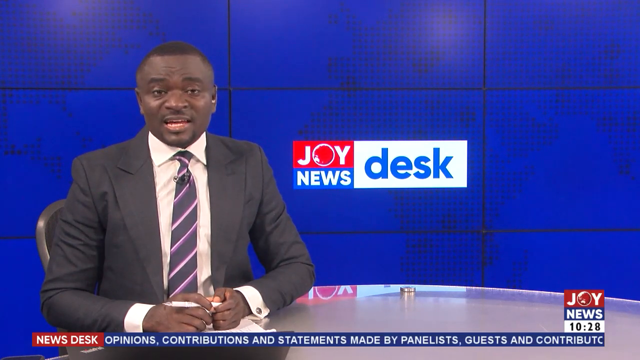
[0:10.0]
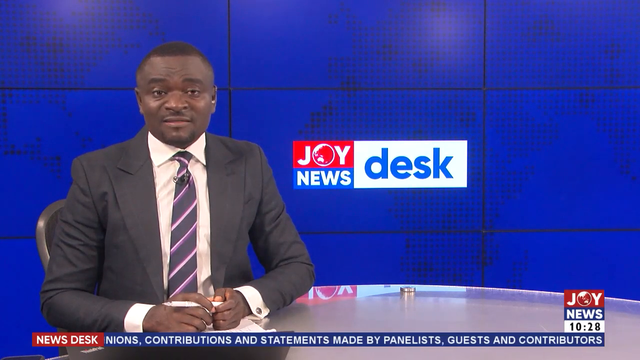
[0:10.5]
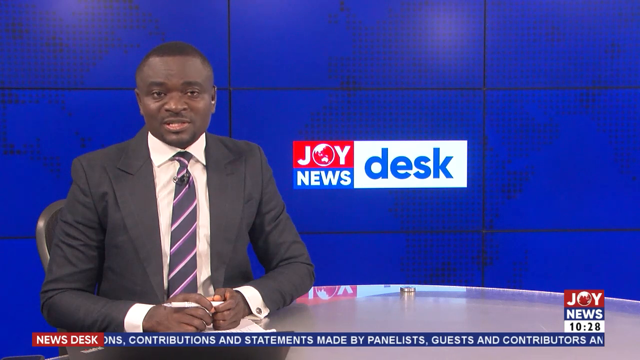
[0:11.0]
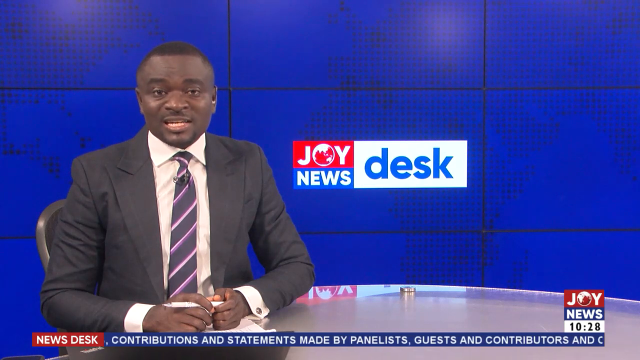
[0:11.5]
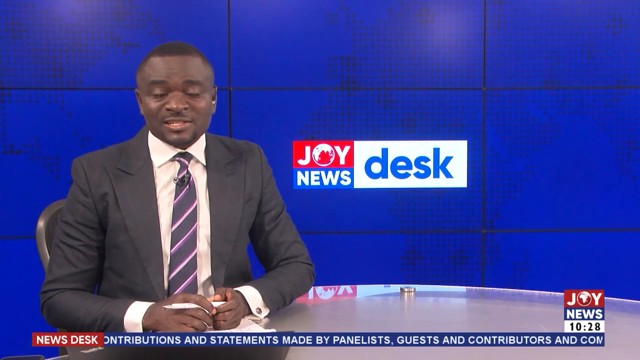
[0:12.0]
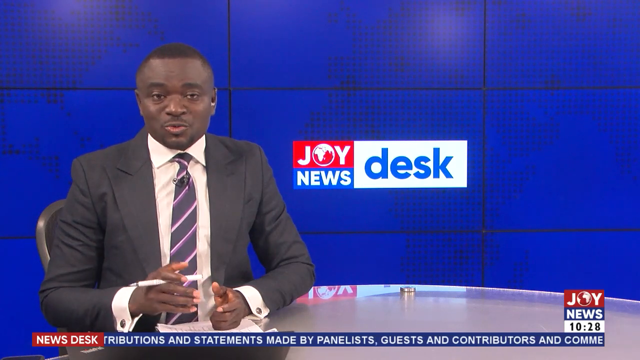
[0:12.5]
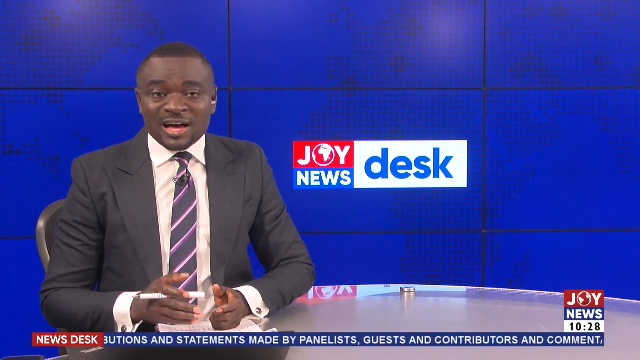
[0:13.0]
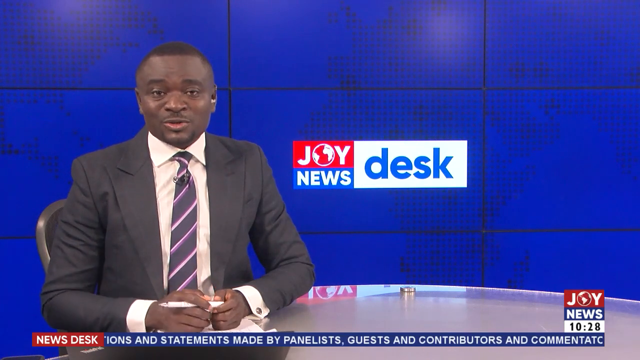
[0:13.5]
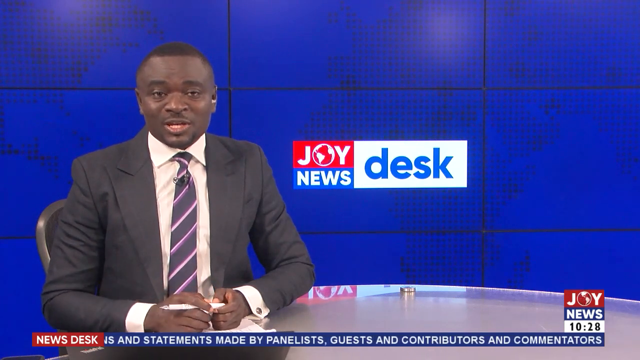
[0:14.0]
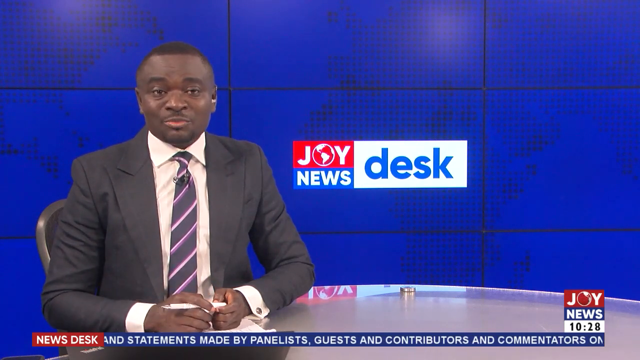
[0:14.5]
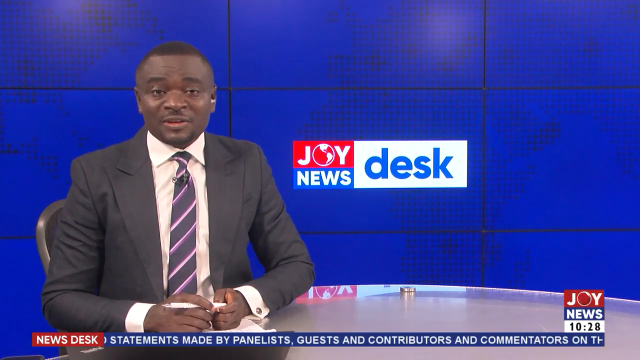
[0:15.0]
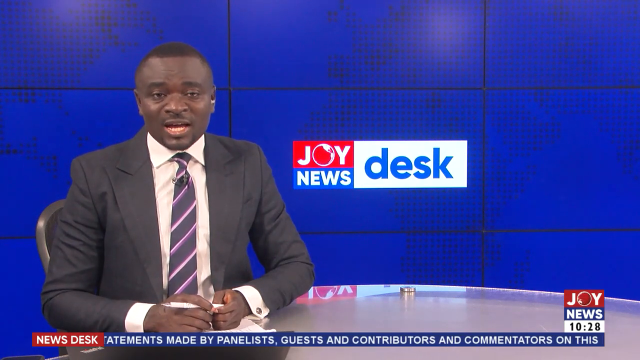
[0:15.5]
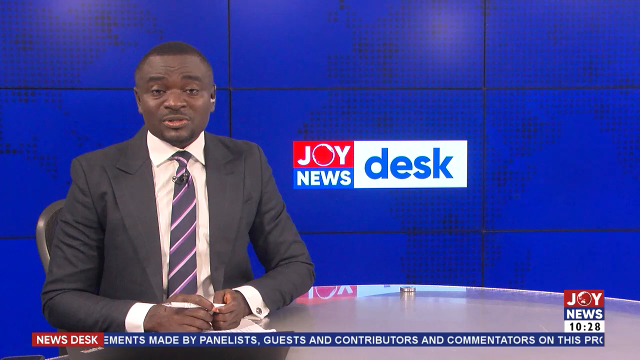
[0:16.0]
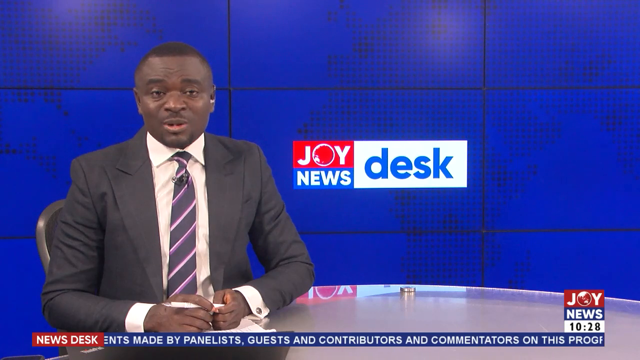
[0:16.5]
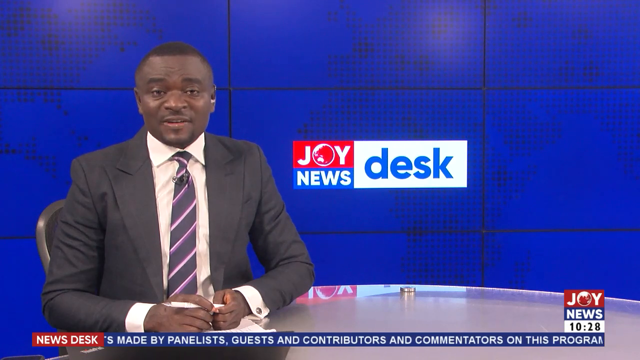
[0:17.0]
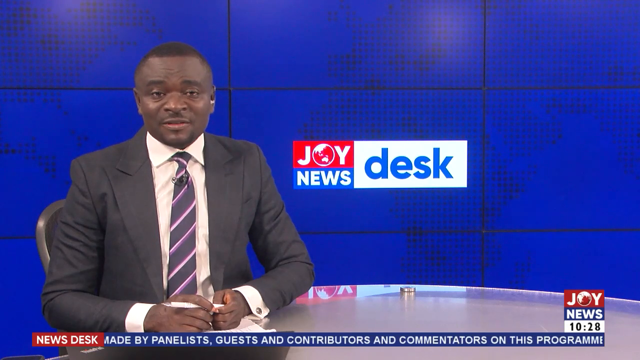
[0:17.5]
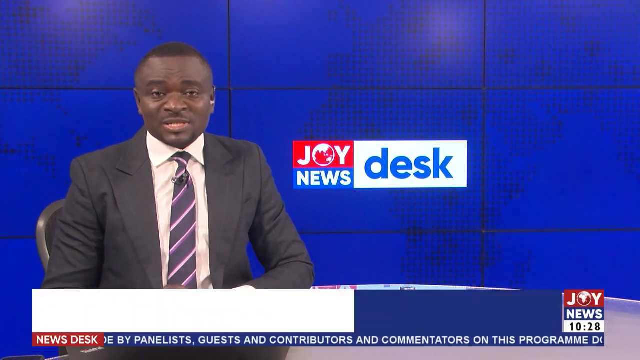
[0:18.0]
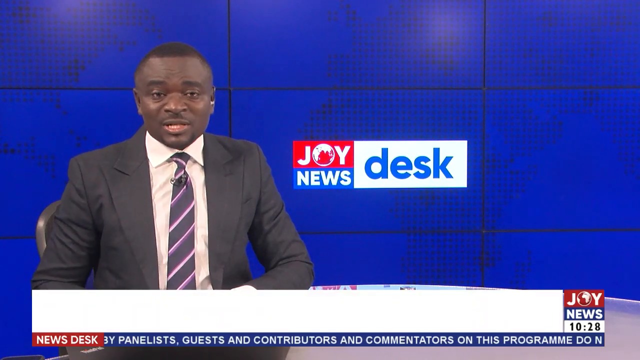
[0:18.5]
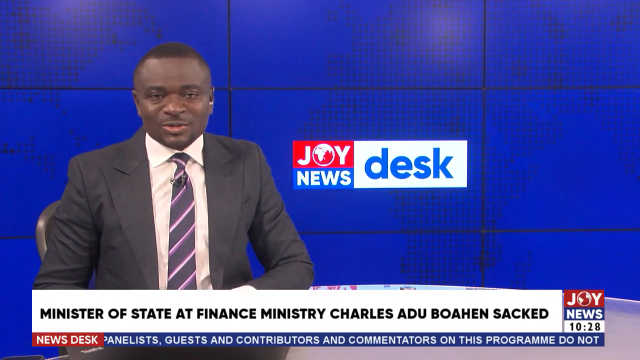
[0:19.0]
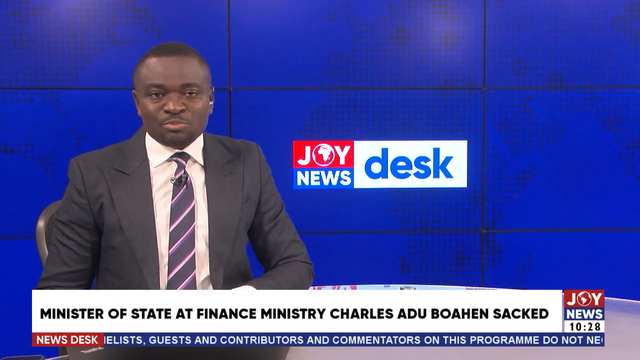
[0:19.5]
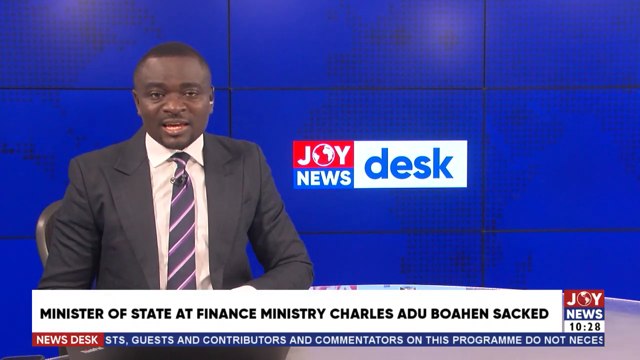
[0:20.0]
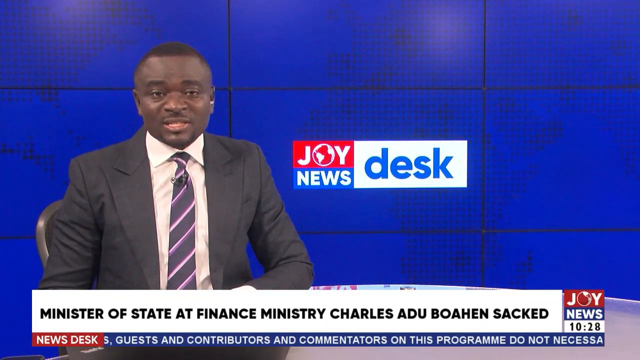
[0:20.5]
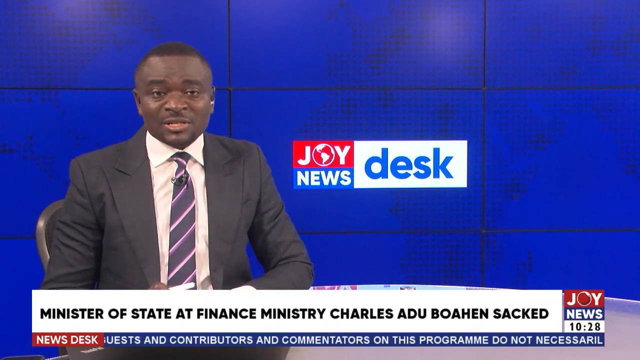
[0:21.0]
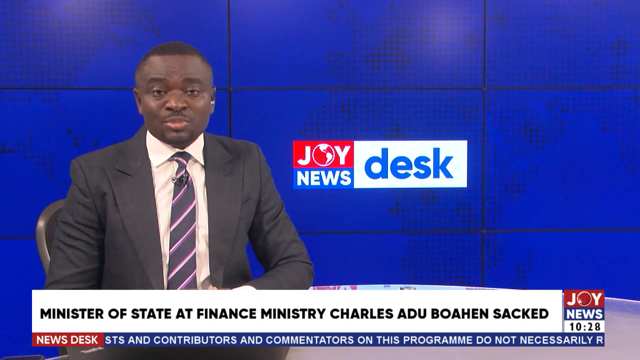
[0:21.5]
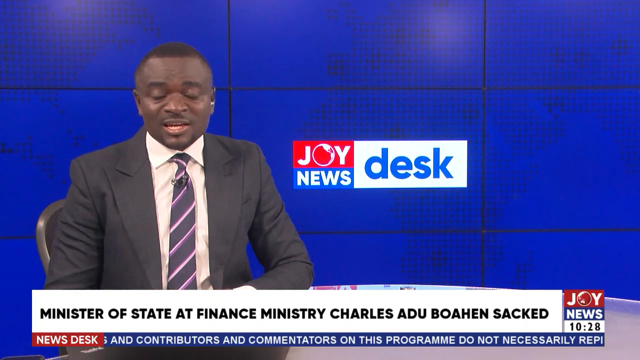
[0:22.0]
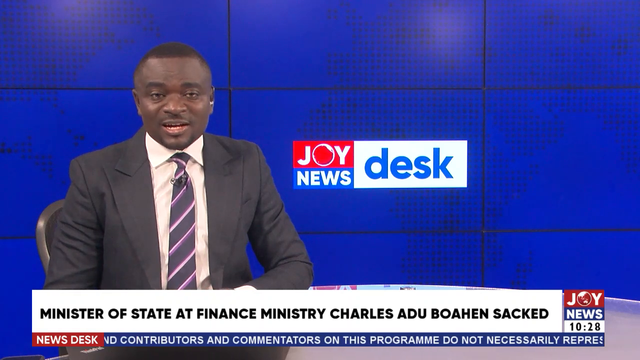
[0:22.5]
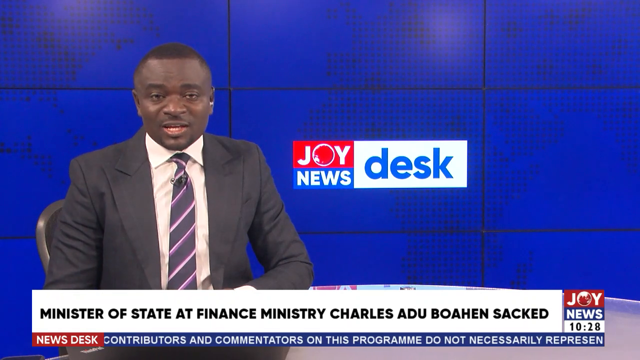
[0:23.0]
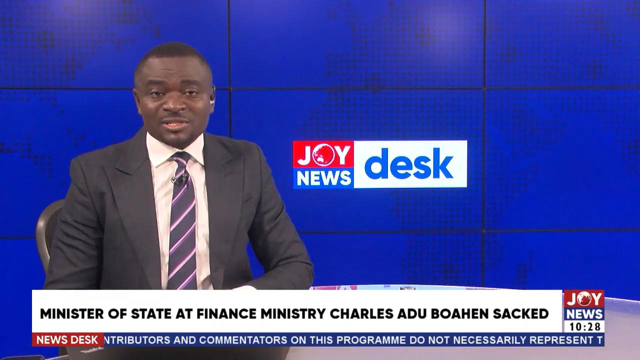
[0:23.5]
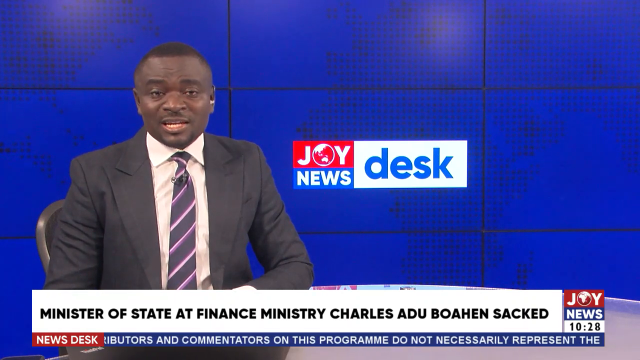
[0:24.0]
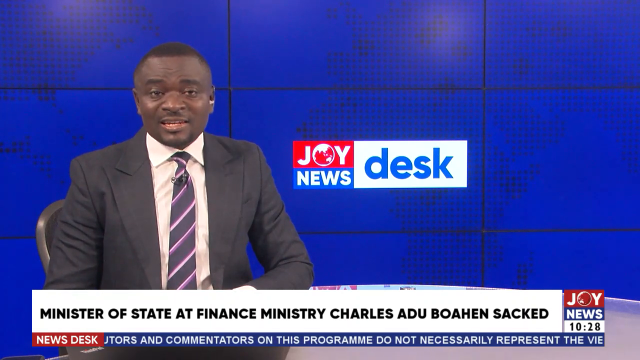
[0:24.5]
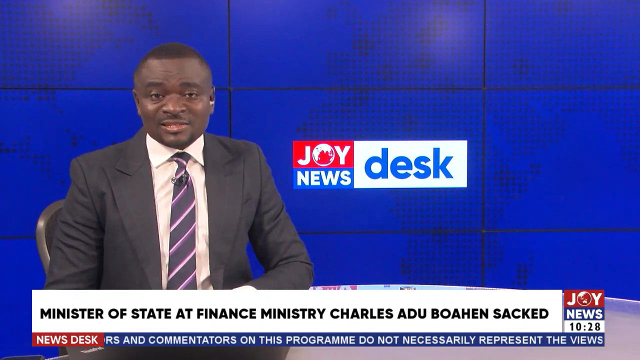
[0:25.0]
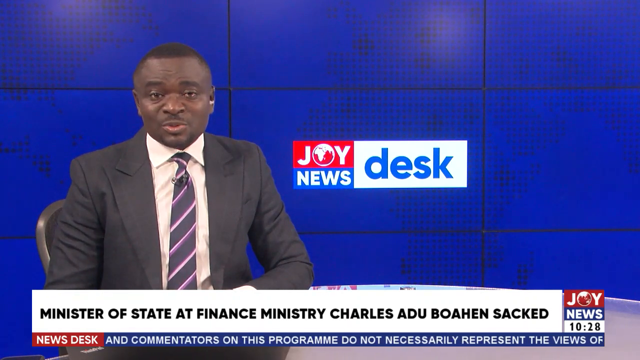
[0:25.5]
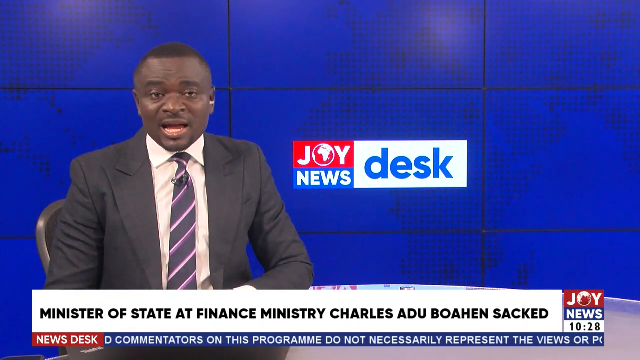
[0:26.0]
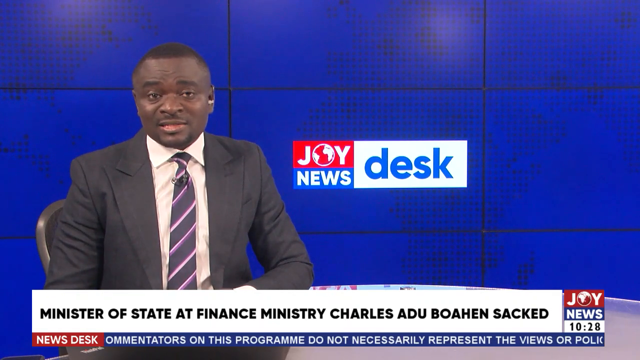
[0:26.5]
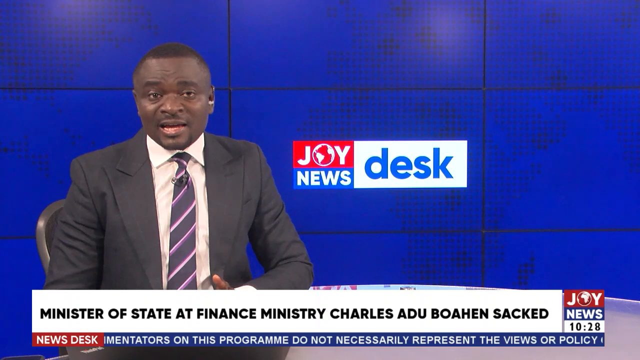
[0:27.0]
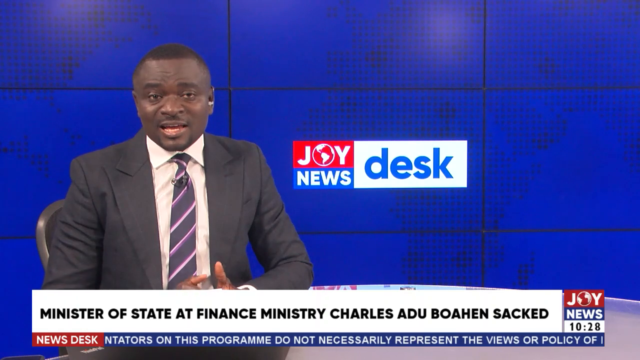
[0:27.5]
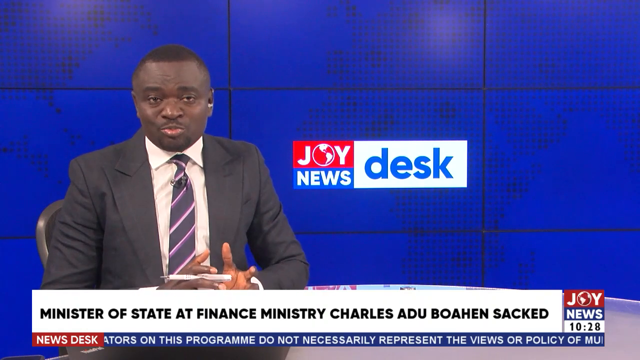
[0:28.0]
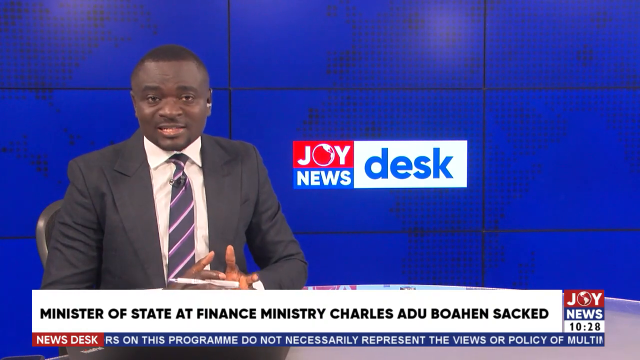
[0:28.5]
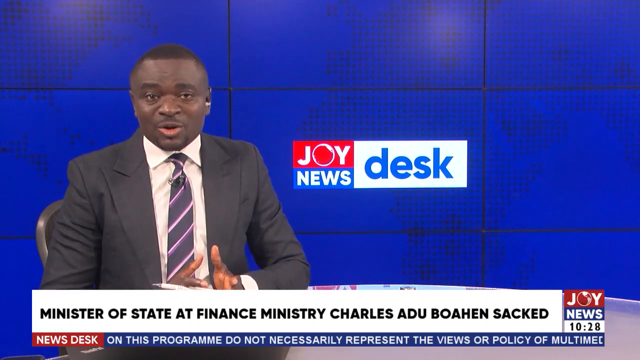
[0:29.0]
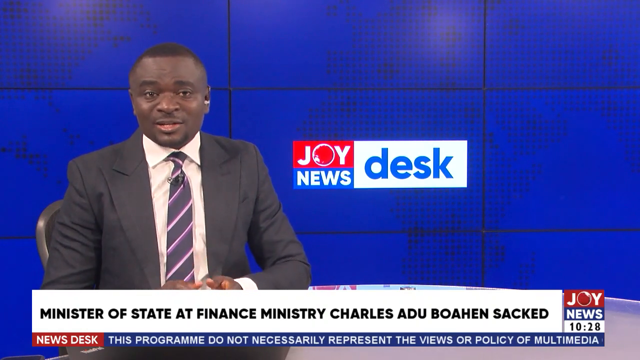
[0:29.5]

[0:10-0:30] The newscaster is against a blue screen reading "Joy News Desk" as he talks, and a flashing headline reads "Minister of State at Finance Ministry, Charles Adu Boahen sacked" in a white bar at the bottom of the screen. The time shown is 10:28, without a.m. or p.m. He wears a gray suit jacket, a purple and navy striped tie and a white button-down shirt, with a black microphone attached to his tie. He has very short hair and holds a white pen, his hands resting on some white papers, probably his notes. Behind him, the blue screen sort of shows the shapes of continents, made of sort of pixelated little black squares forming Africa or the United States.